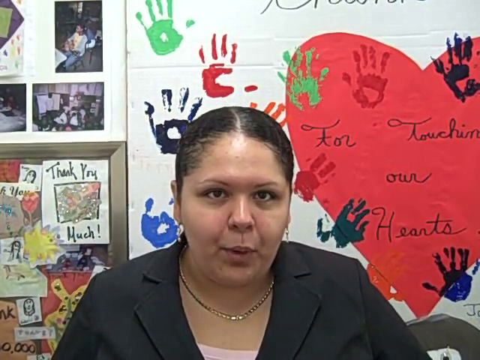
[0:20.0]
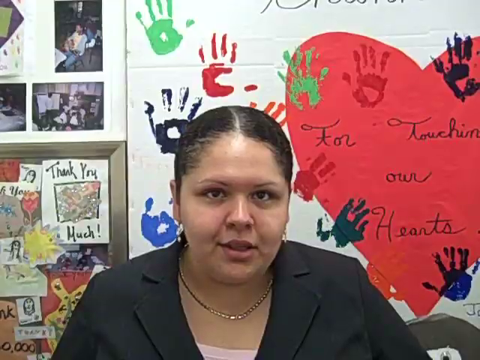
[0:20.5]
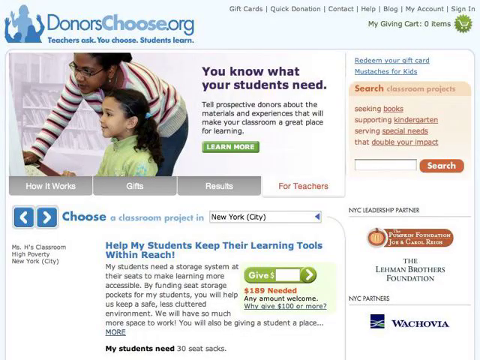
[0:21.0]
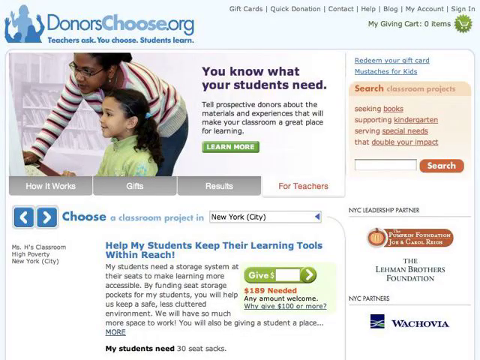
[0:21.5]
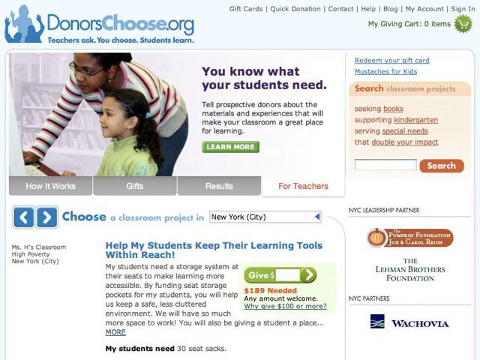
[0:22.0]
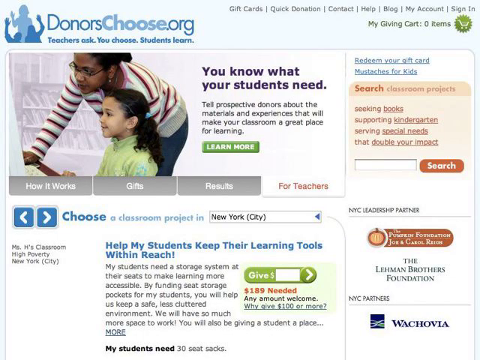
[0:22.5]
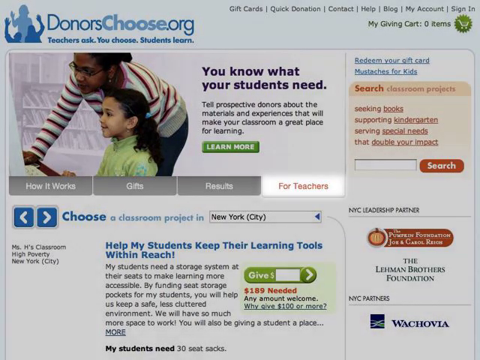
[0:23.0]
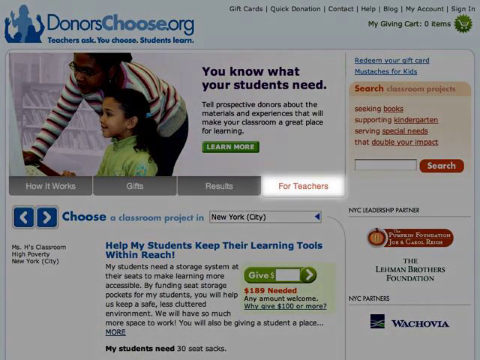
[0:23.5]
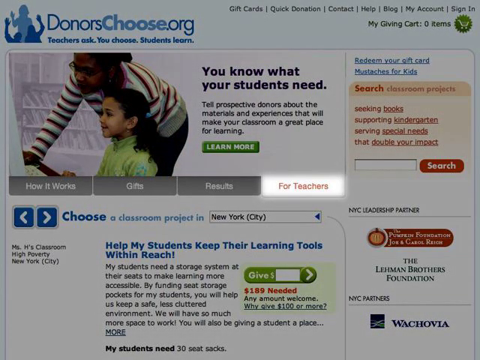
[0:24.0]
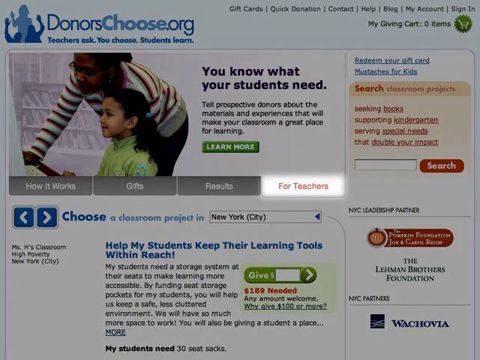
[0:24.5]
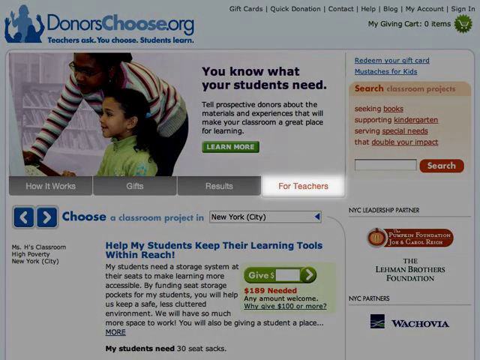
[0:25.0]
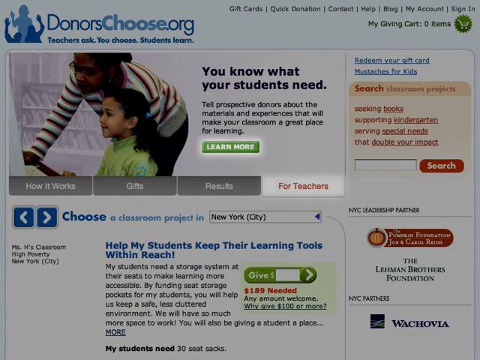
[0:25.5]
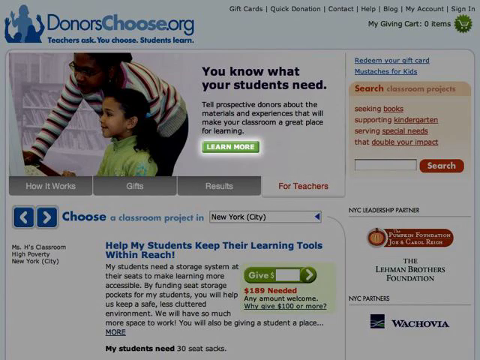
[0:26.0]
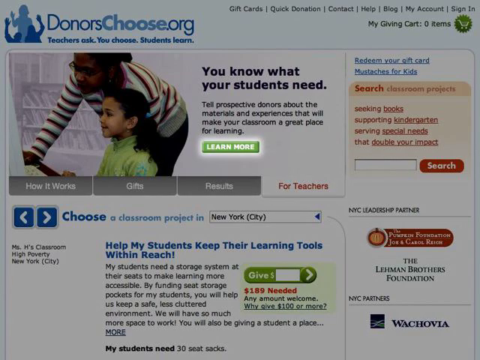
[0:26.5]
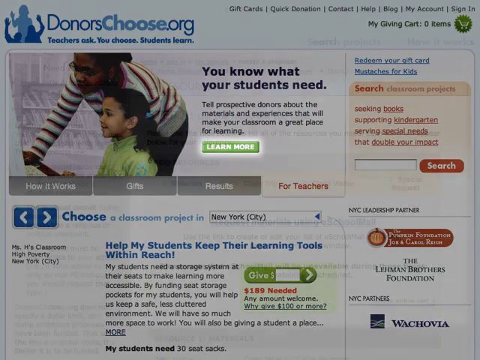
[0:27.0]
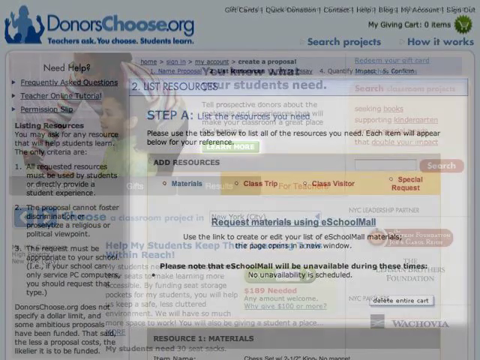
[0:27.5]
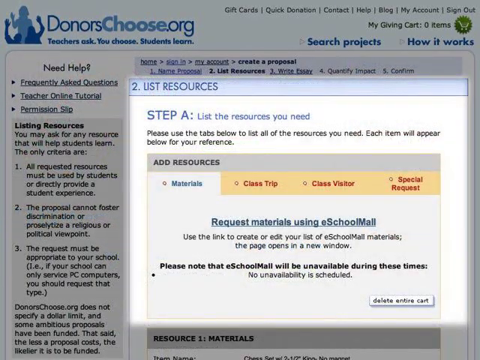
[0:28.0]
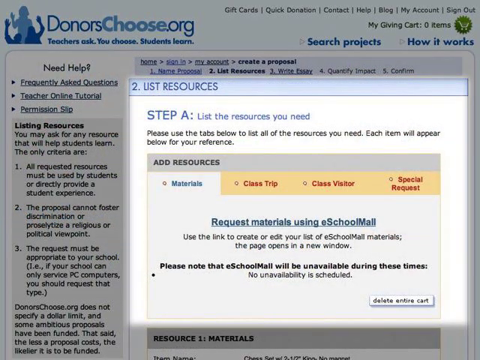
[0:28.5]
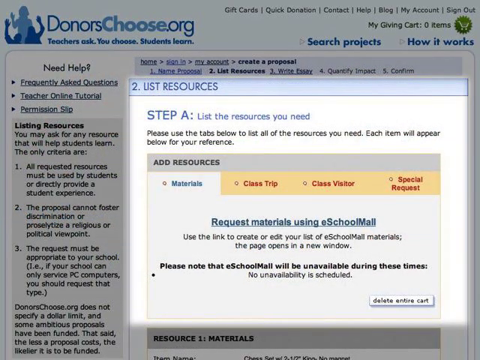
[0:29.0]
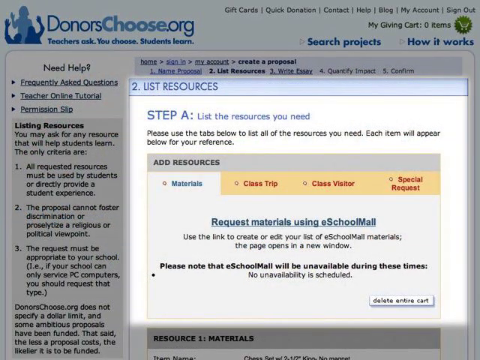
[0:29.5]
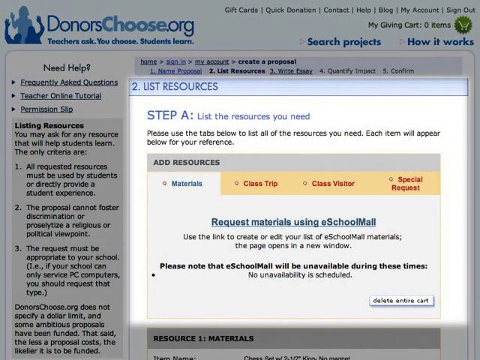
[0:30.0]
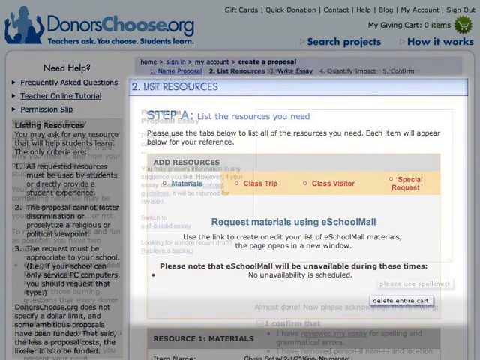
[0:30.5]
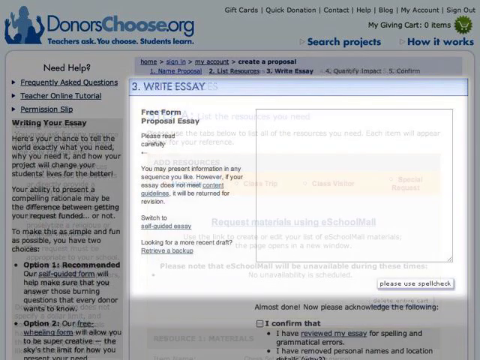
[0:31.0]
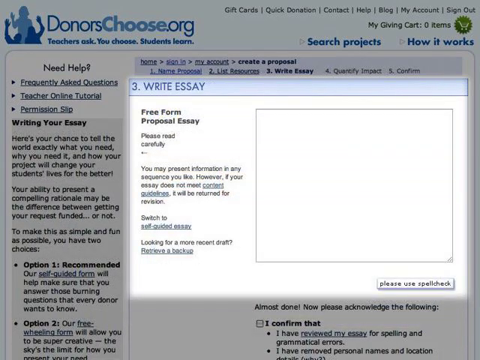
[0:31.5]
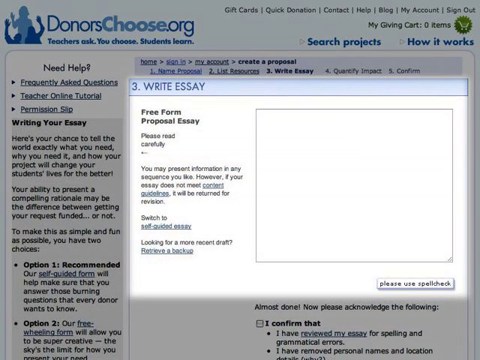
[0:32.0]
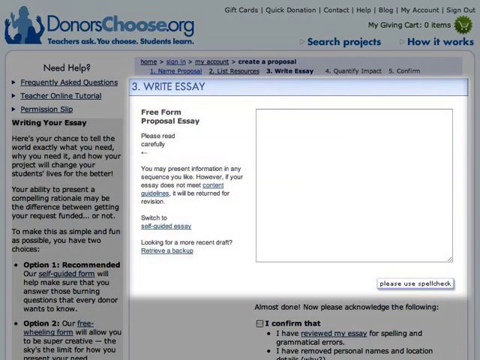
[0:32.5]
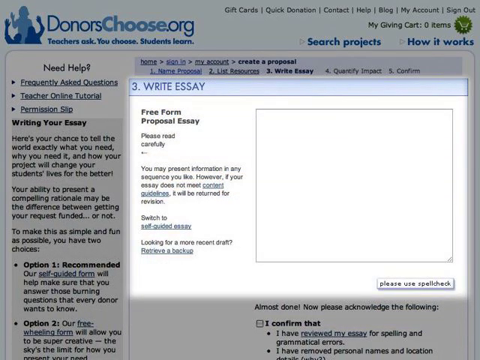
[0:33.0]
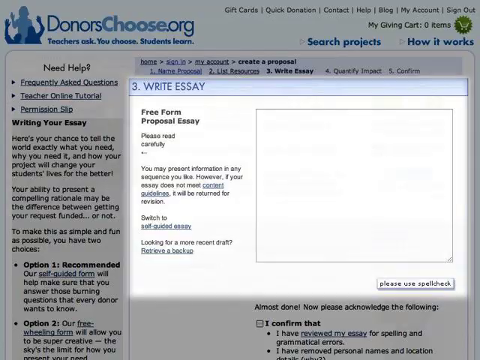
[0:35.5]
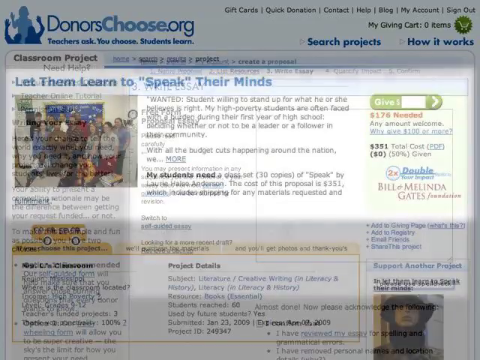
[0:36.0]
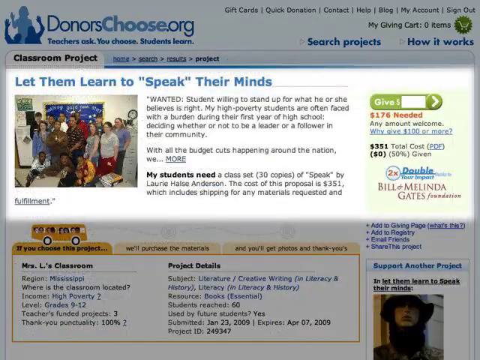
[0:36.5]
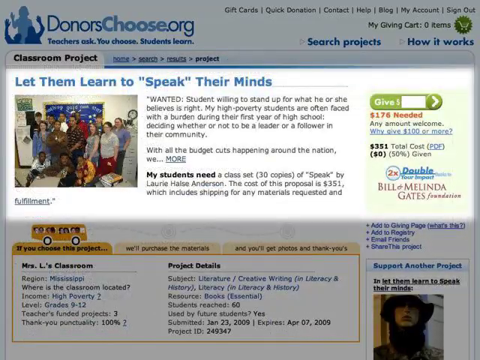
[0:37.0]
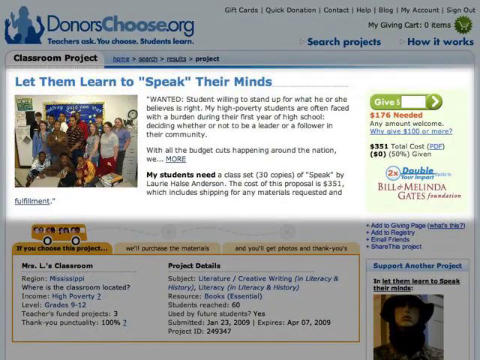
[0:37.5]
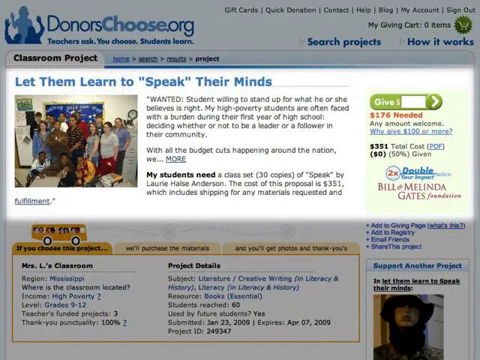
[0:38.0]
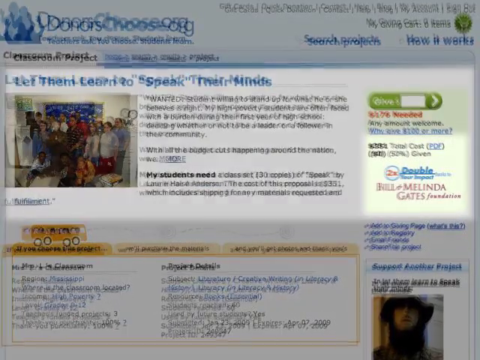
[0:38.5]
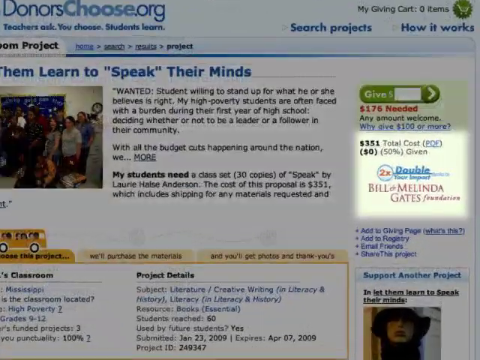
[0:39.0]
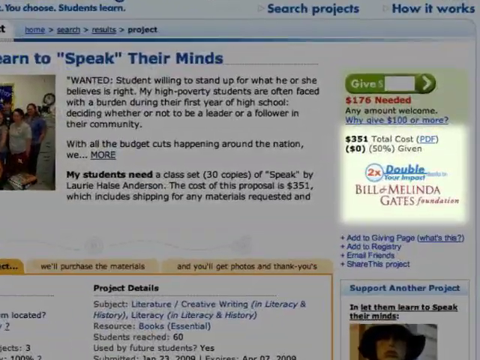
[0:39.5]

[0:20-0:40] The donorschoose.org site is shown, with a lot of information mainly about material for students to learn from; the organization seems to help teachers and maybe even parents with educational material for children. The screen slightly fades and different parts of the website are highlighted: first the part called "for teachers", then "learn more". The screen changes to another part of the website showing some kind of resources list, with options to add resources and possibly search for them. The screen fades again to a part called "write essay"; the text on the site apparently indicates that this essay is for teachers to write what they want to do with a project and how the project will change students' lives for the better. The screen then changes to another part of the website showing some kind of donation goal, possibly for a book or a project.